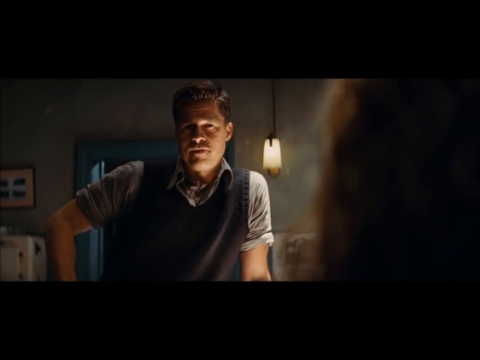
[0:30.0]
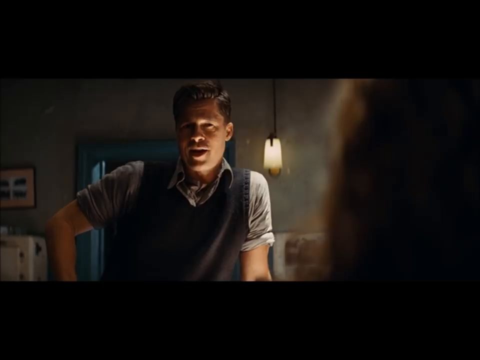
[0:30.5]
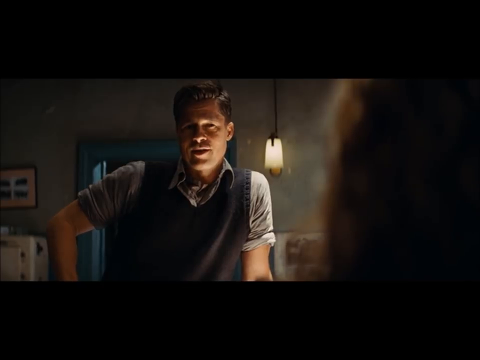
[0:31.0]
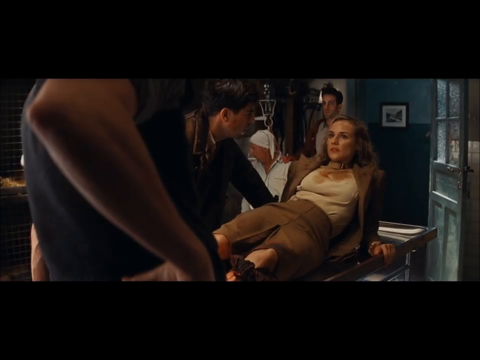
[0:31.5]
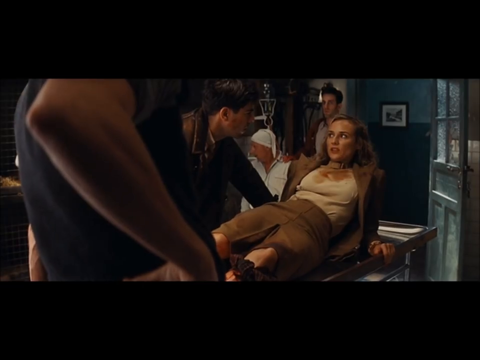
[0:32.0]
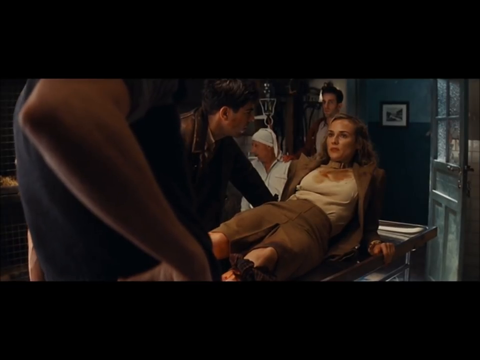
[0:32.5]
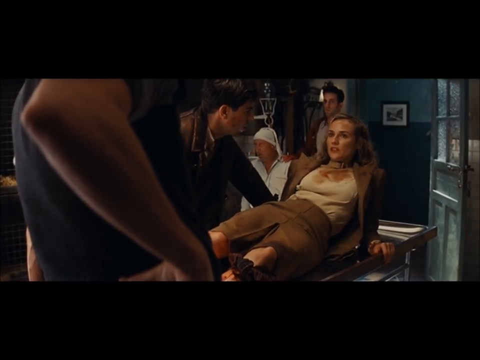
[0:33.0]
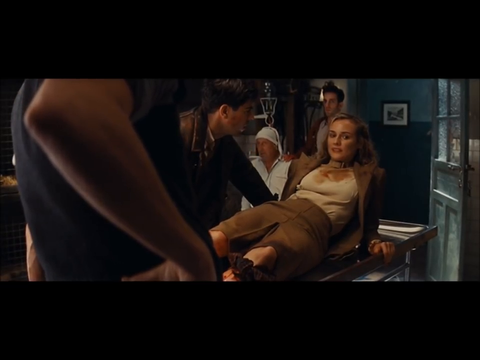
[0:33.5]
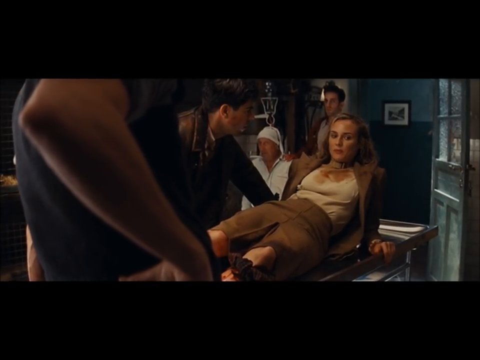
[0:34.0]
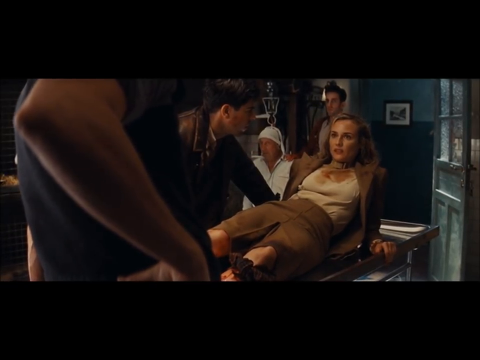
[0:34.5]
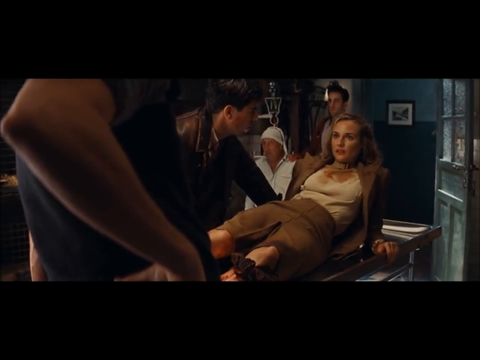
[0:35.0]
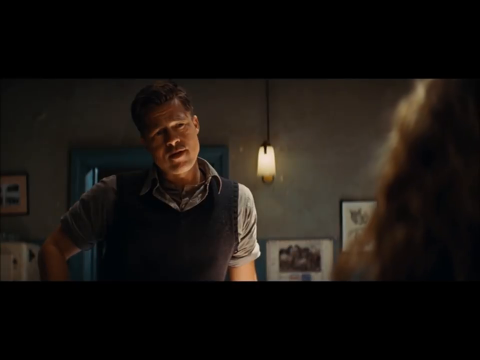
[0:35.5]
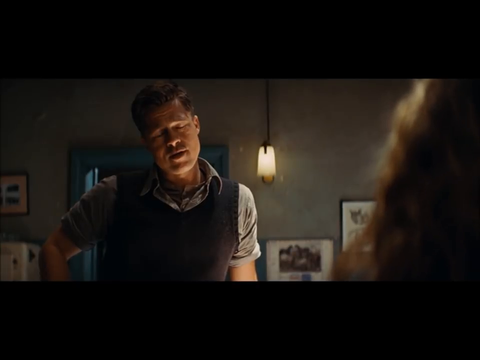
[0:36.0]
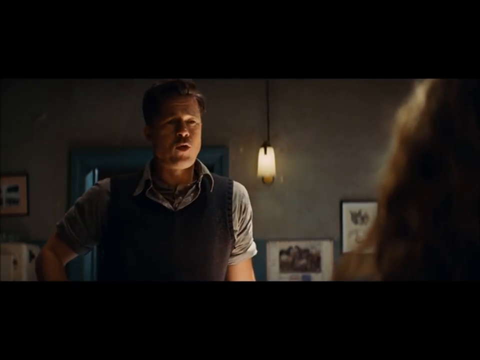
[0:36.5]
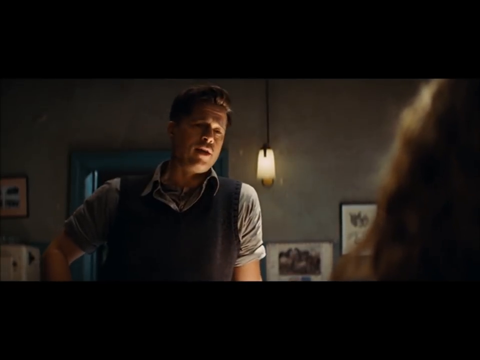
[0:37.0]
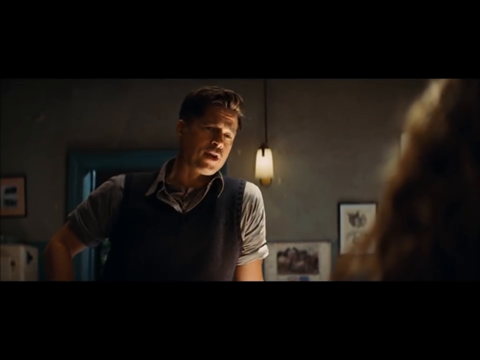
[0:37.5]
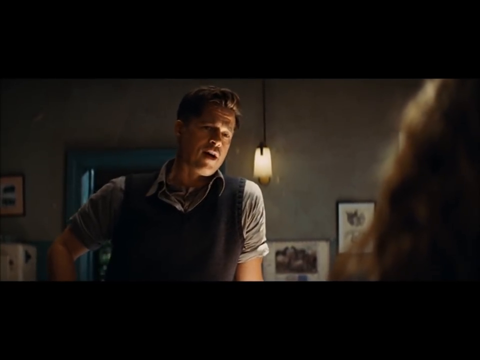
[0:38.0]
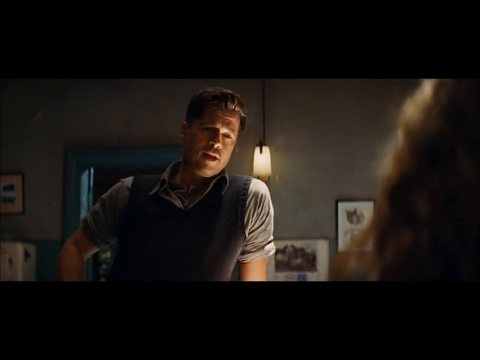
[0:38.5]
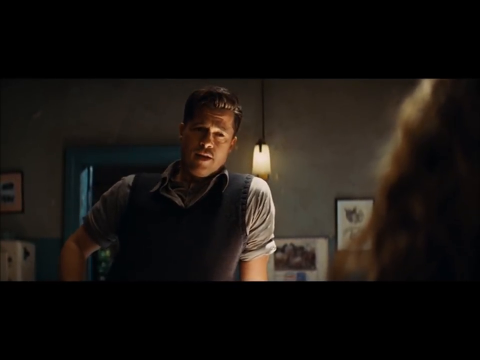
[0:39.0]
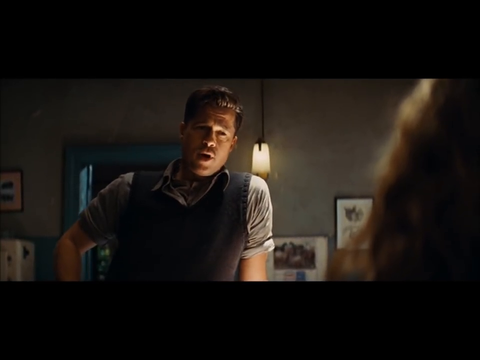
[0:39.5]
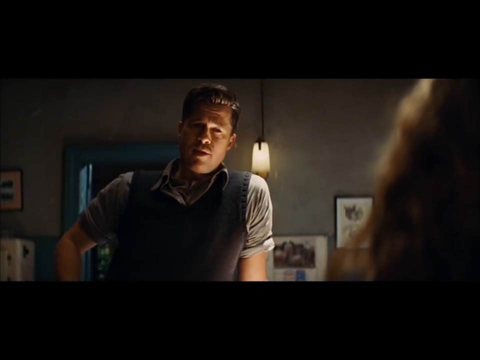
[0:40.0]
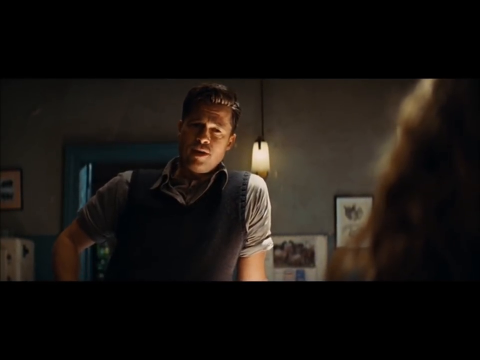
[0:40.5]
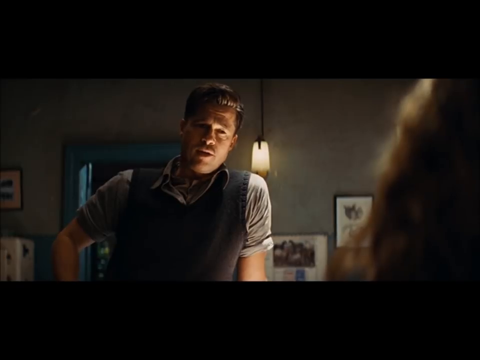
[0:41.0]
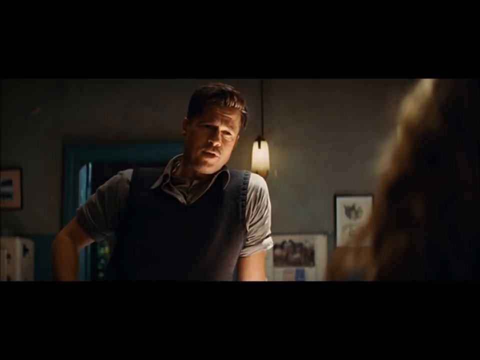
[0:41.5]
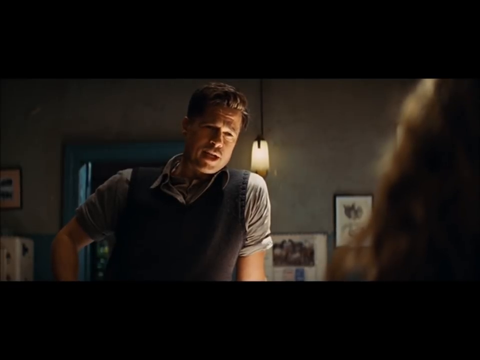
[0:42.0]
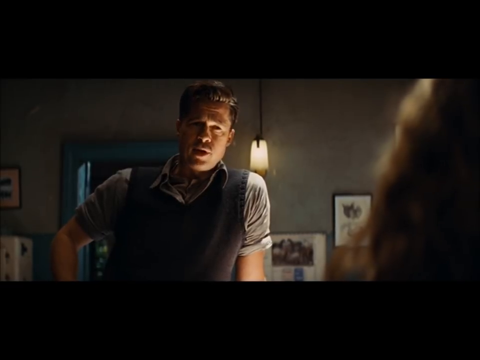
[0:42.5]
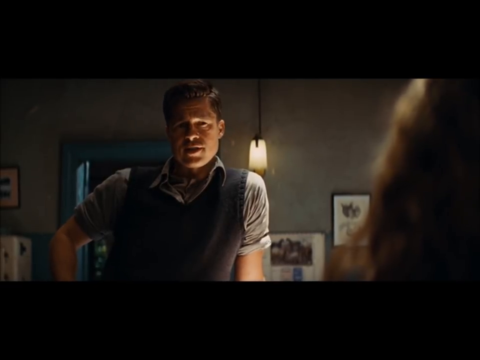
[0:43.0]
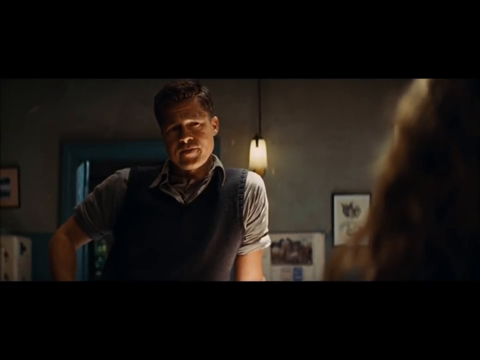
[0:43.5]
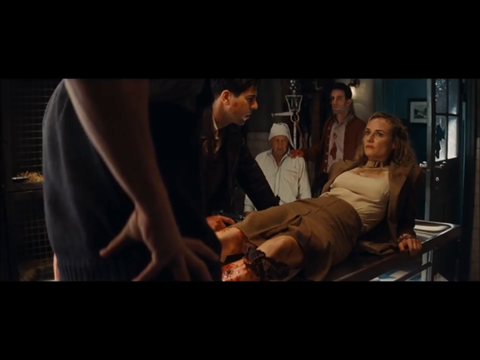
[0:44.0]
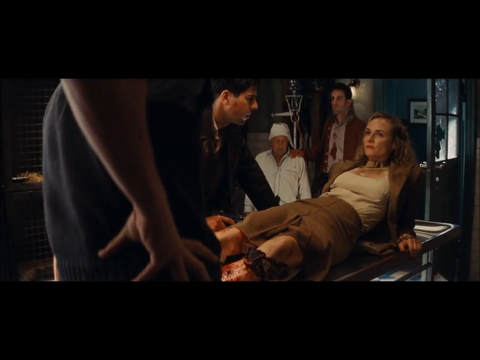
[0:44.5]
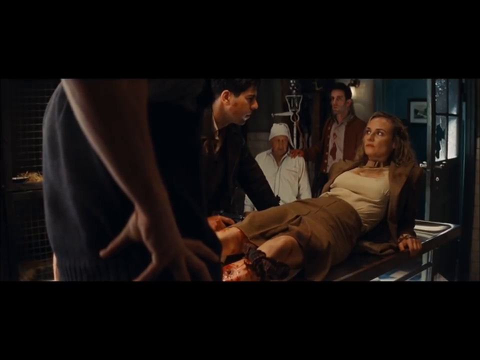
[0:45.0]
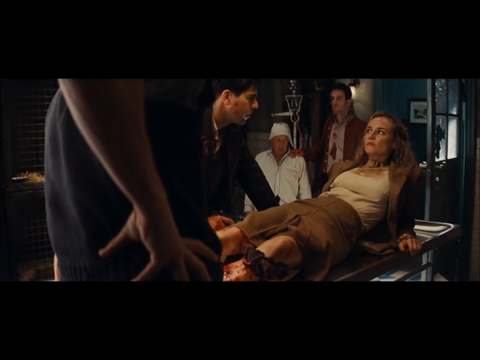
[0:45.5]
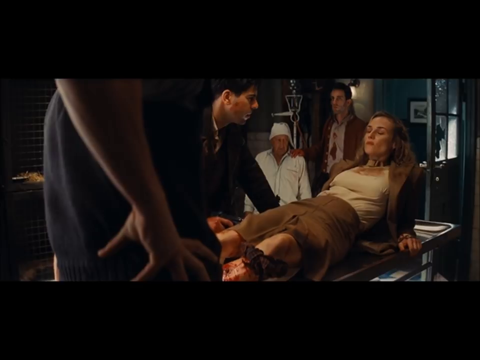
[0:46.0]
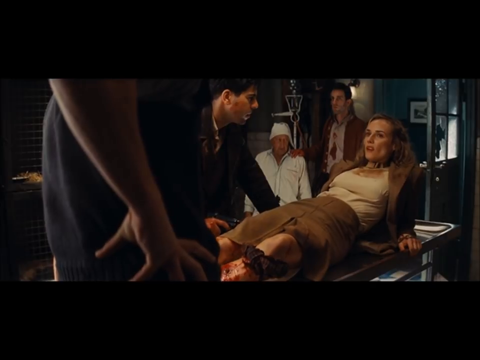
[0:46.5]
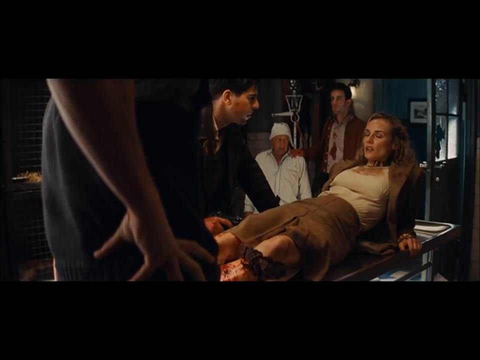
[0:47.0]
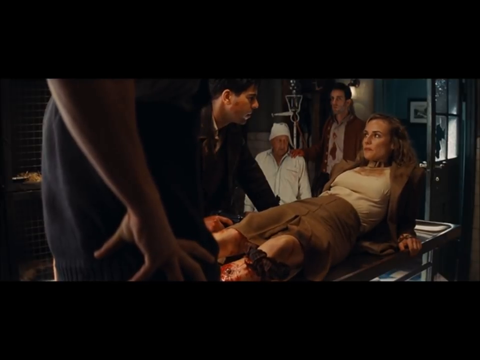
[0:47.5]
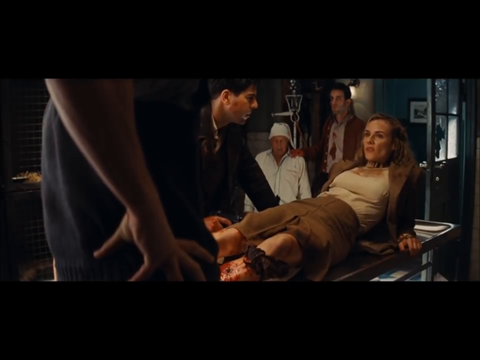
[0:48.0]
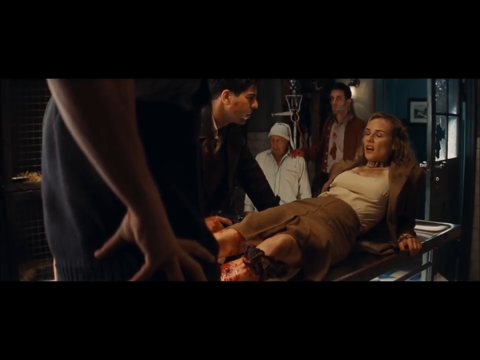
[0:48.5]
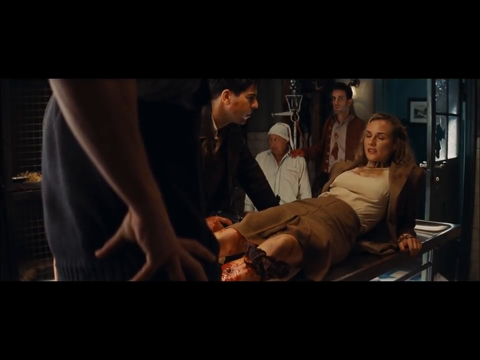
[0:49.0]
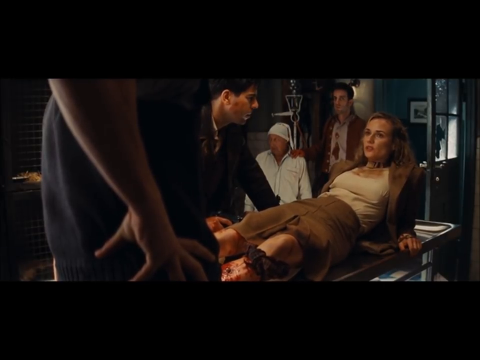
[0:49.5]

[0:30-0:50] In a dimly lit room that looks like an operating room but is in a typical household, a woman in a skirt and what looks like a brown suit with a white shirt lies on a metal-framed bed, her legs covered in blood. A young man stands close to her and speaks to her, and the camera alternates between shots of him and her as the conversation continues. At one moment the woman briefly grimaces before responding to him again. Standing near her is another man who rests one hand on the metal bed frame and keeps his eye fixed on her. In the background two other people watch the conversation: one dressed in white is sitting down, and the other, in casual clothing, is standing. Behind the young man a lamp casts light, adding to the dim atmosphere of the room. Despite her injuries, the woman continues to speak with him.